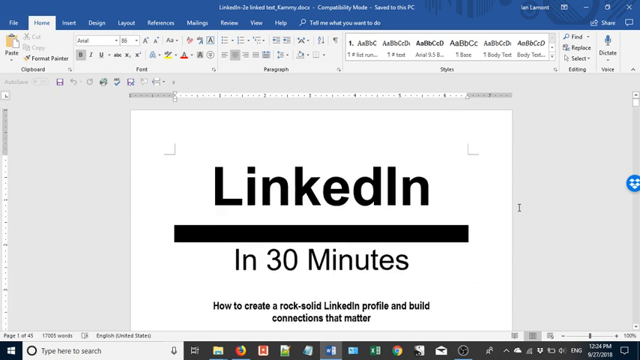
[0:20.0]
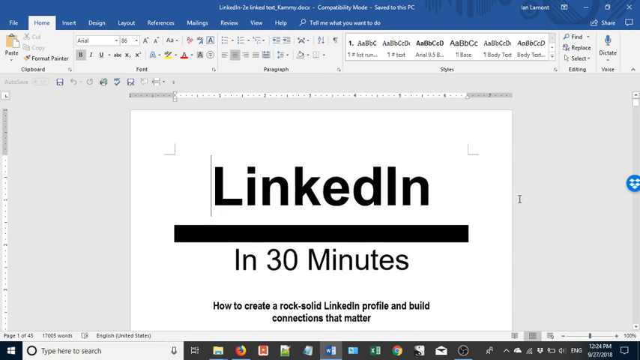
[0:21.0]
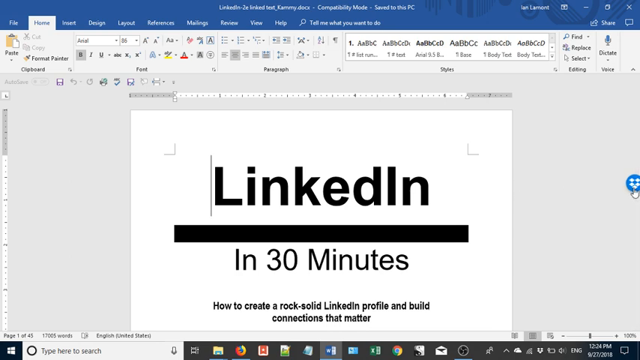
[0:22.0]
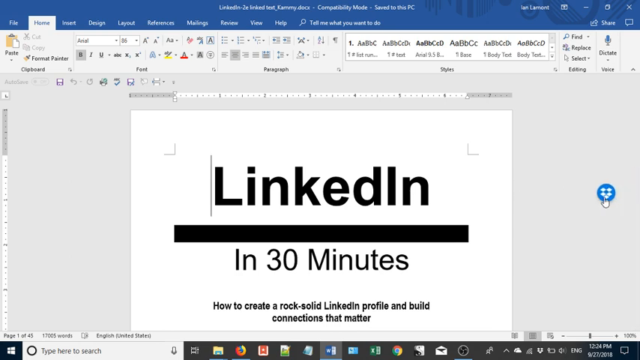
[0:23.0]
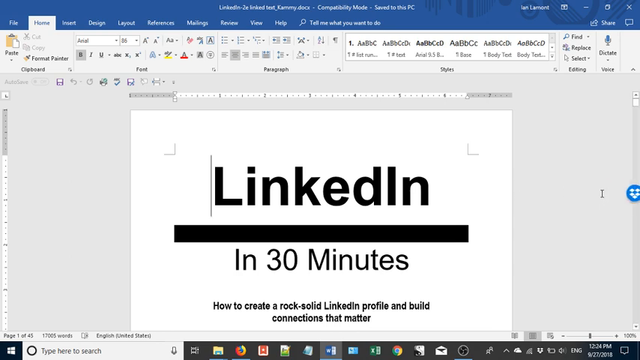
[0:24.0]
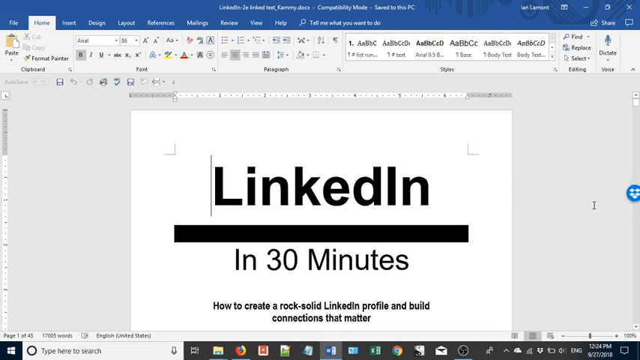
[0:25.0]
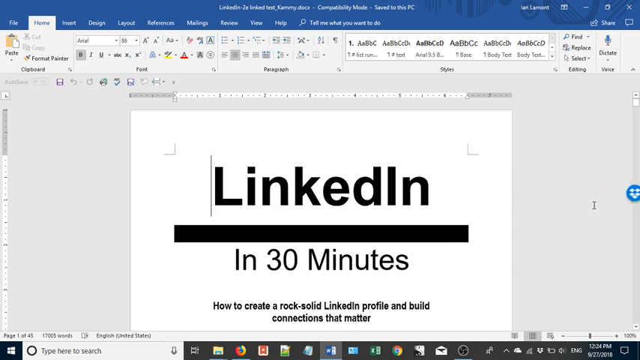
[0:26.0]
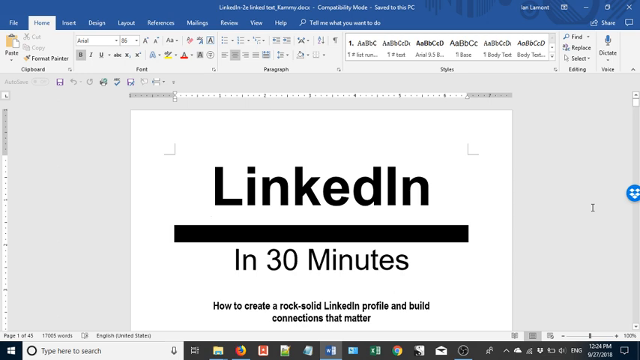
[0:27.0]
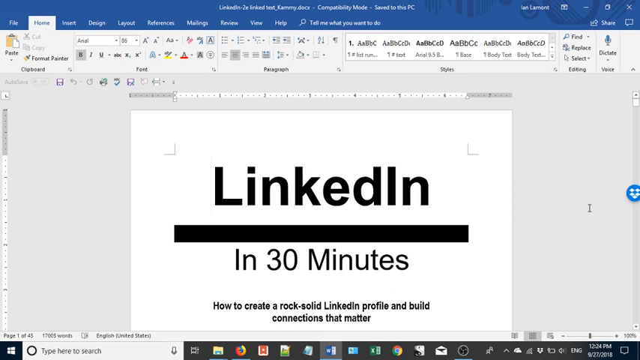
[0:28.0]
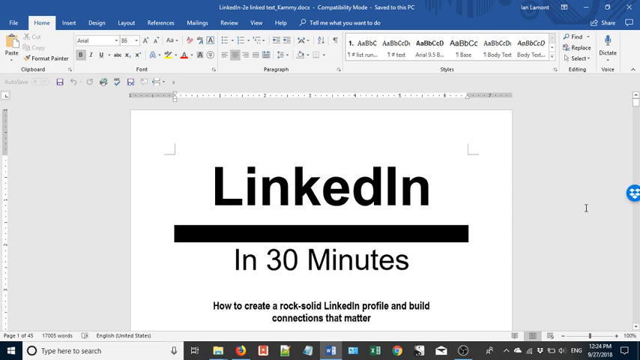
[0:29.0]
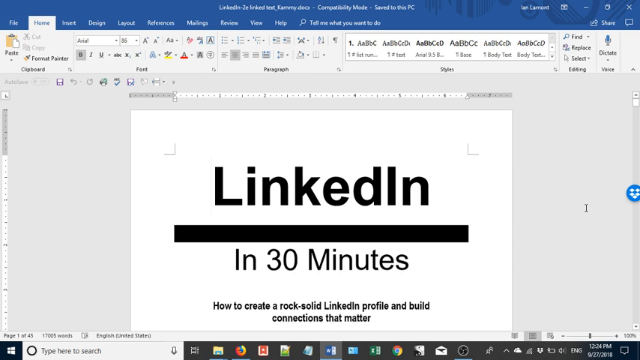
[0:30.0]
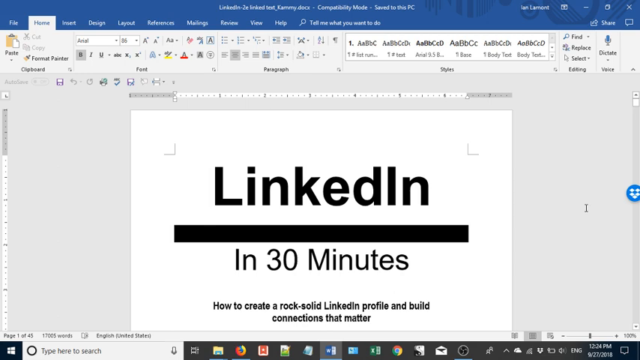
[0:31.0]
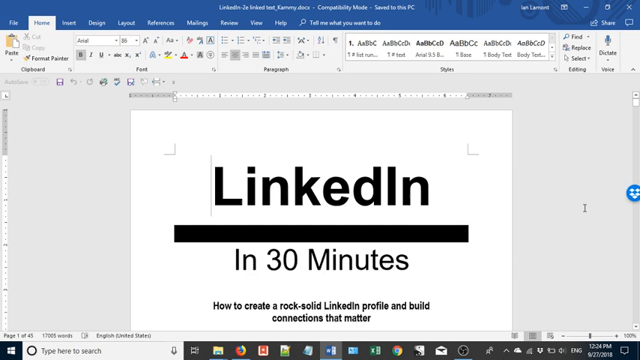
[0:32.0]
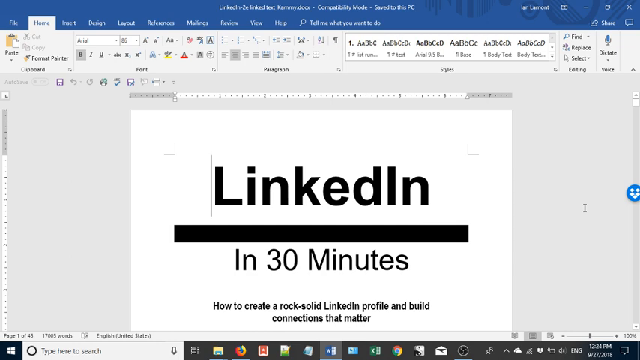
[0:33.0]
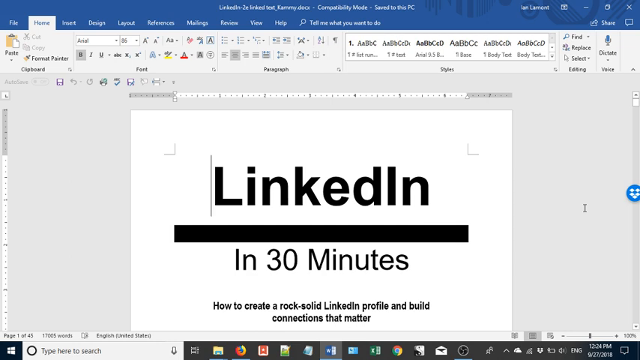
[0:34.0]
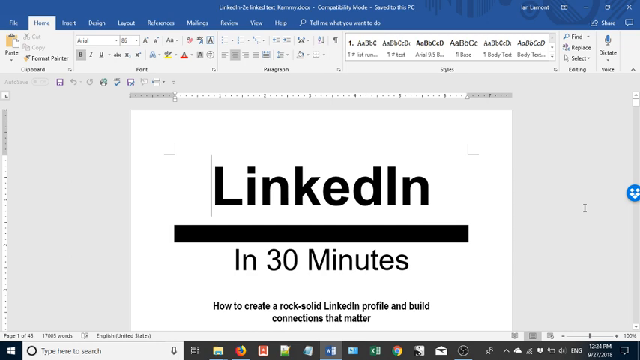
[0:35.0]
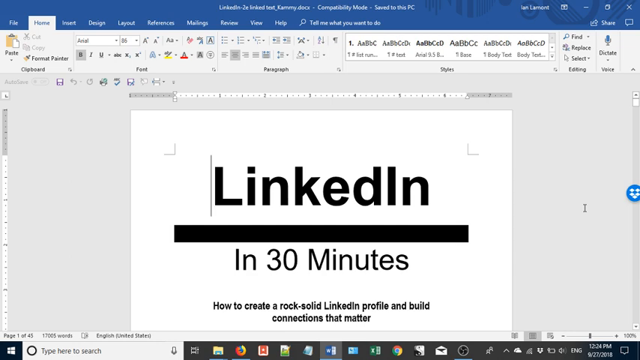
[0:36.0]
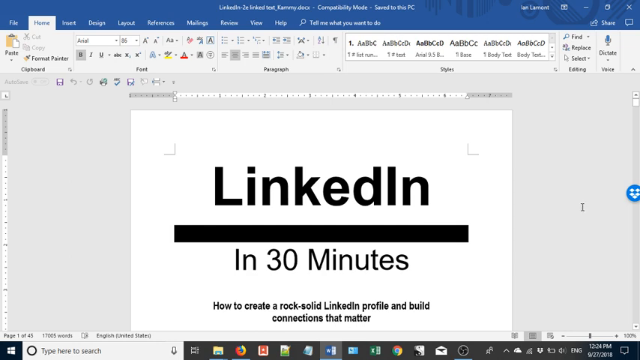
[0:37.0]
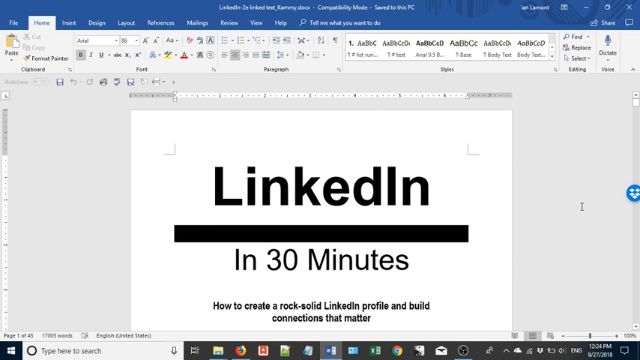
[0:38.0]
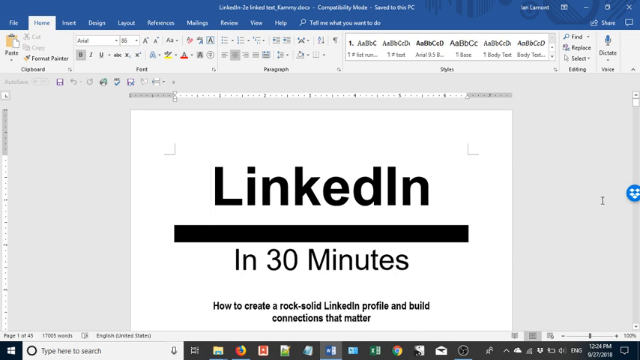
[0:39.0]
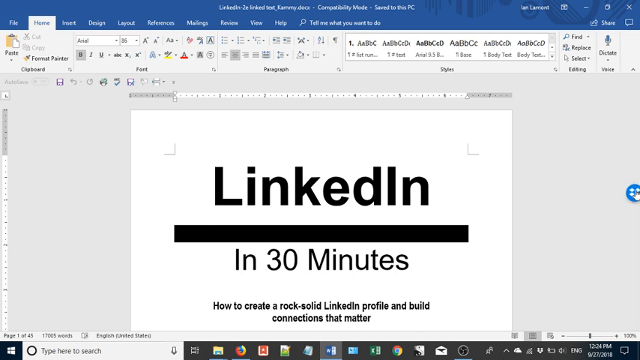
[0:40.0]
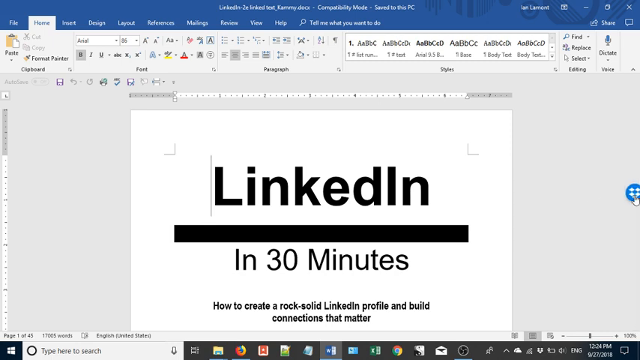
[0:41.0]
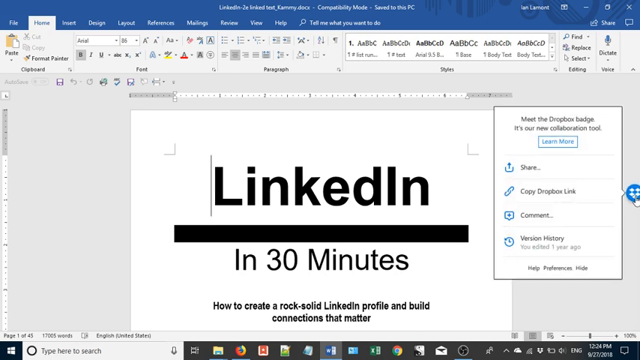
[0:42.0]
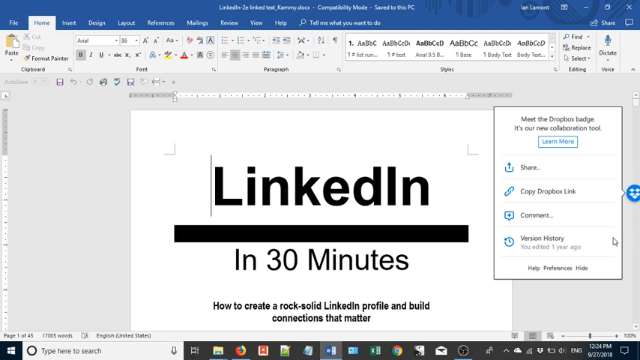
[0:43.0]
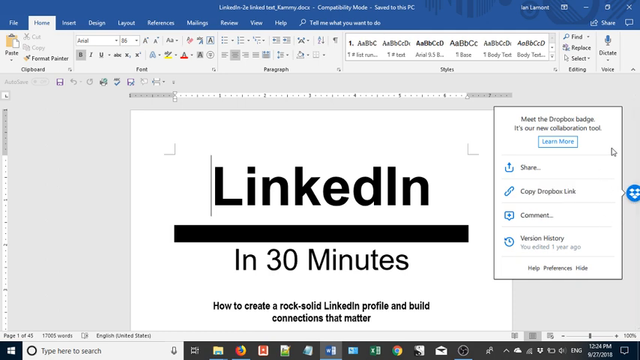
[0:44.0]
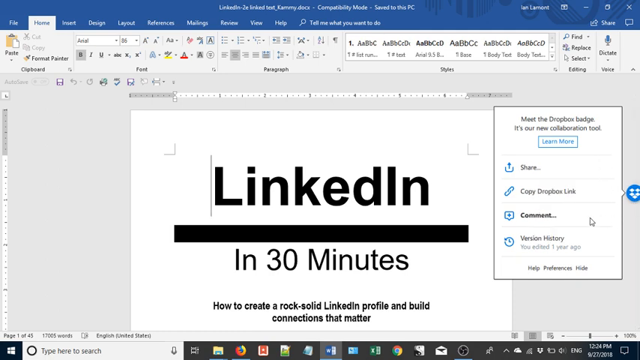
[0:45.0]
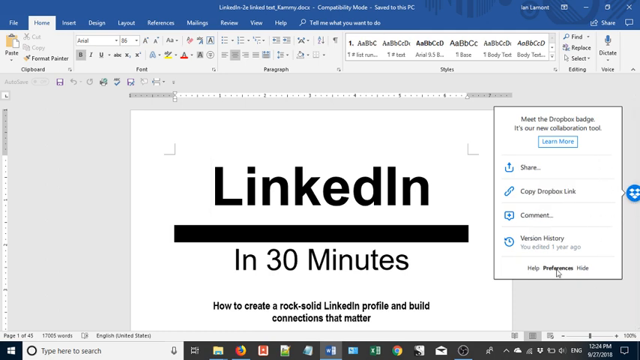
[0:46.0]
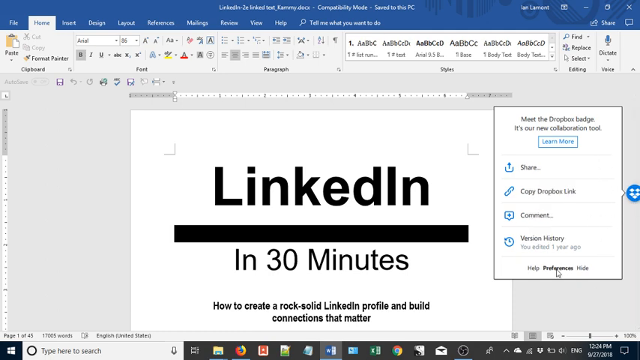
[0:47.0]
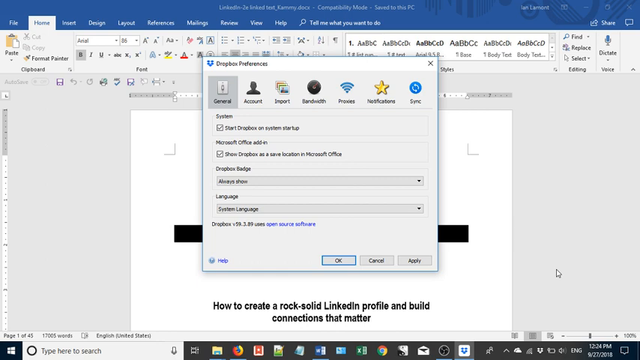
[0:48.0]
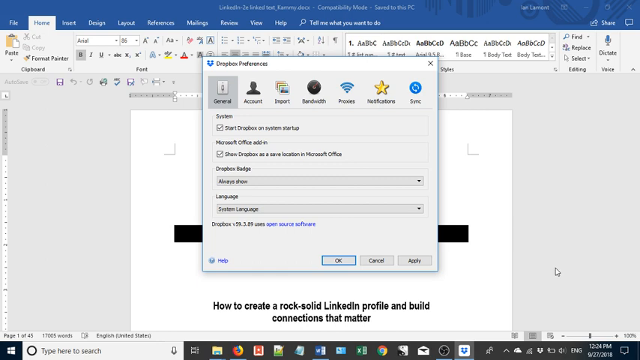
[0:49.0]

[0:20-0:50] The view moves to the LinkedIn, which reads in big black letters "LinkedIn," with "in 30 minutes, how to create a rock-solid LinkedIn profile and build connections that matter" beneath it. This is a view for designing the way the LinkedIn page will look. The user moves the mouse over different places. There are options to change the color, copy, paste, and format painter, a clipboard, and different fonts at the top. The user pulls up a panel reading "Meet the Dropbox badge. It's our new collaborated tool." Beneath it are "Learn More," then "Share," "Copy Dropbox link," "Comment," and "Version History," and text saying "you edited one year ago." At the bottom are "Help," "Preferences," and "Hide."